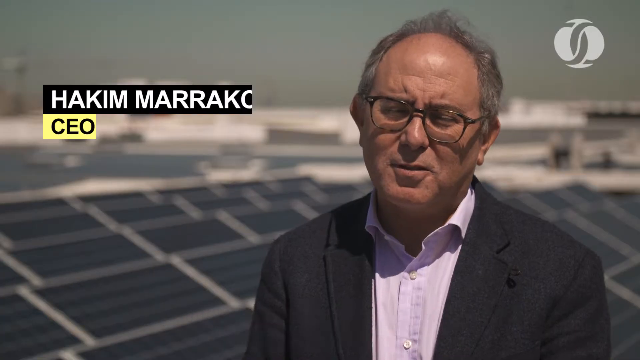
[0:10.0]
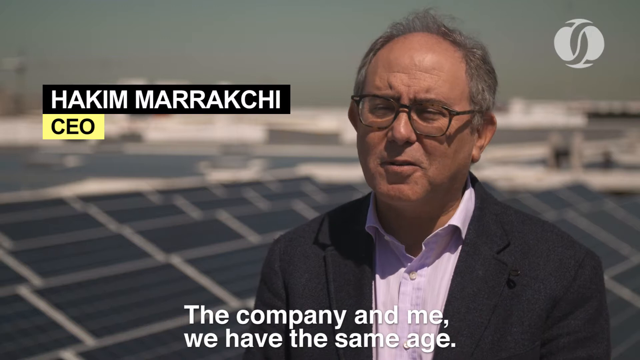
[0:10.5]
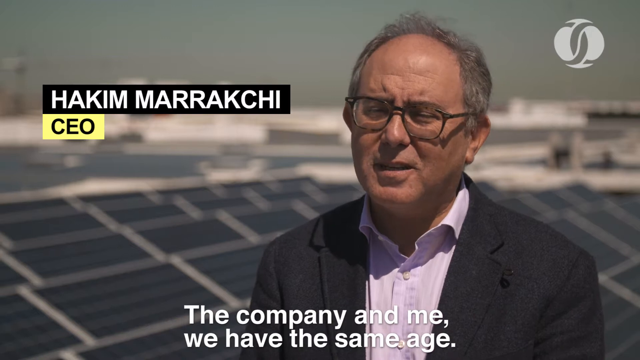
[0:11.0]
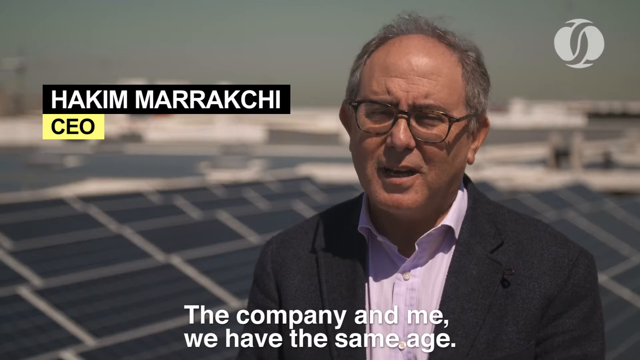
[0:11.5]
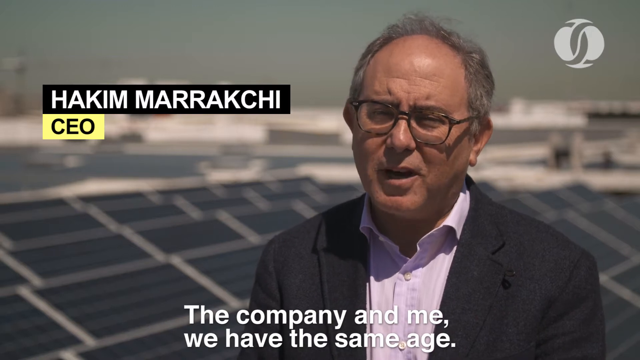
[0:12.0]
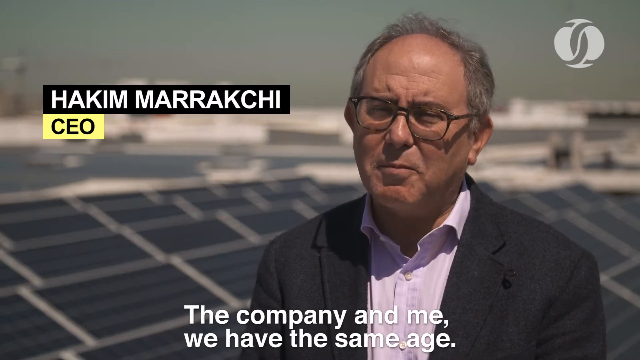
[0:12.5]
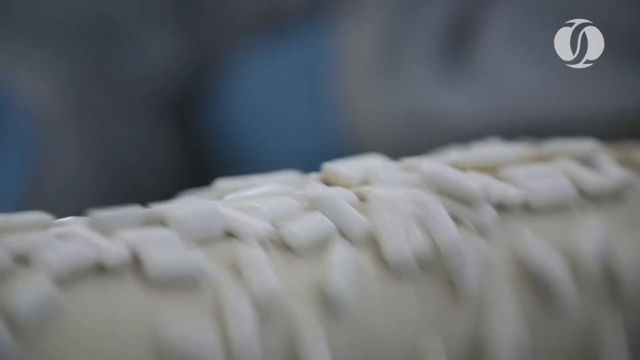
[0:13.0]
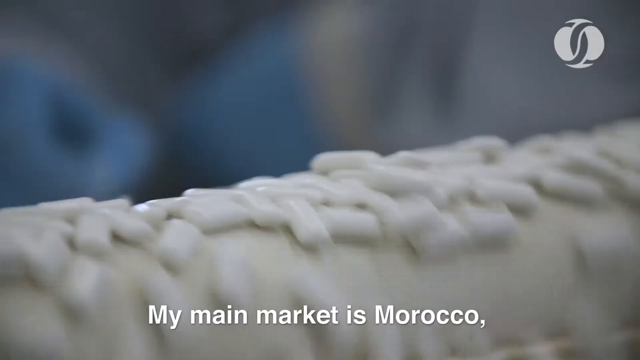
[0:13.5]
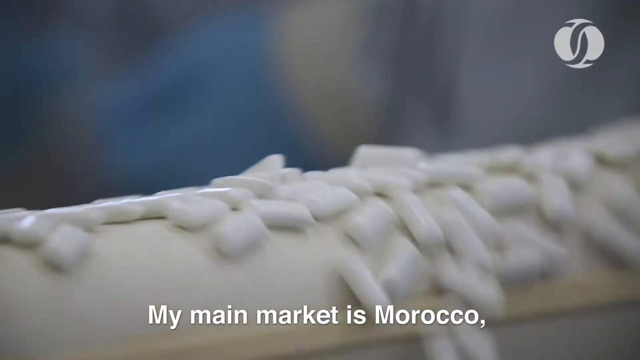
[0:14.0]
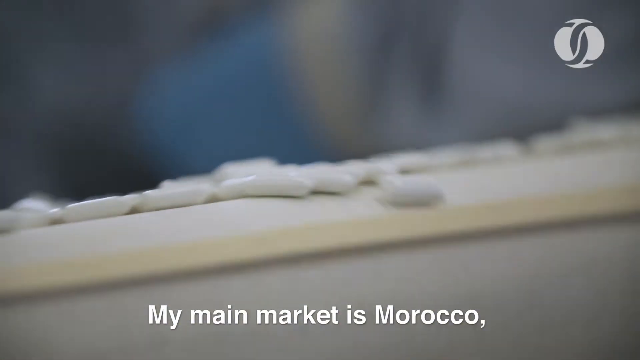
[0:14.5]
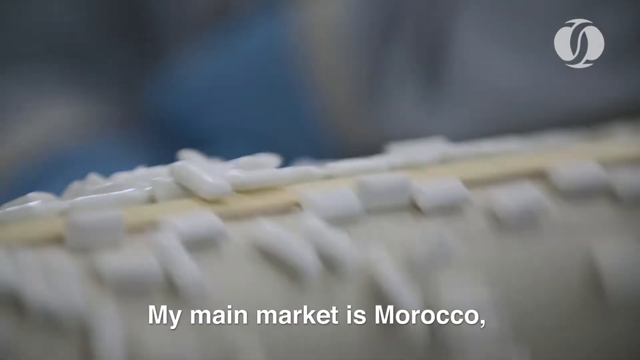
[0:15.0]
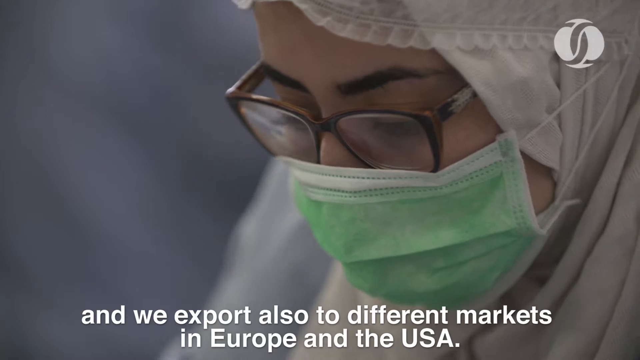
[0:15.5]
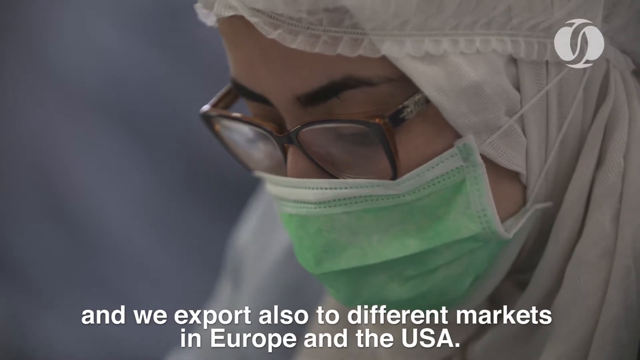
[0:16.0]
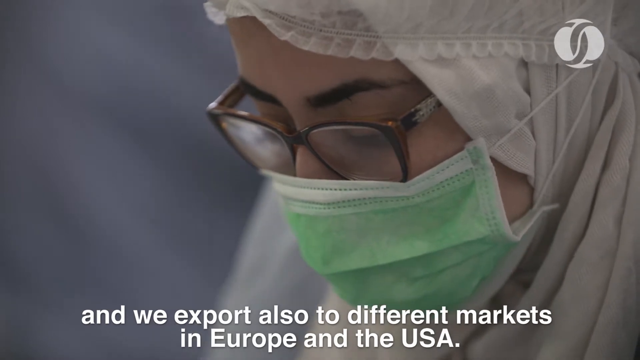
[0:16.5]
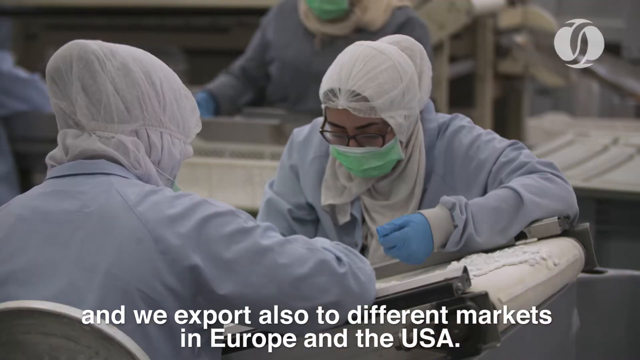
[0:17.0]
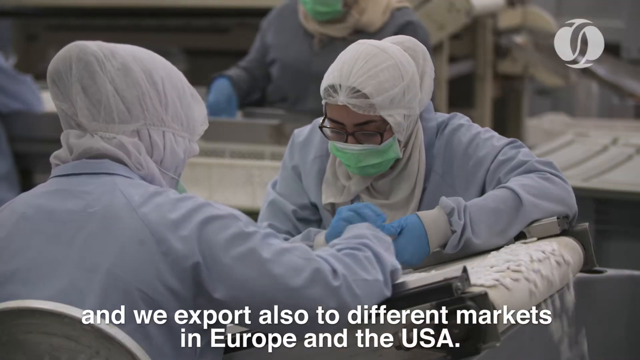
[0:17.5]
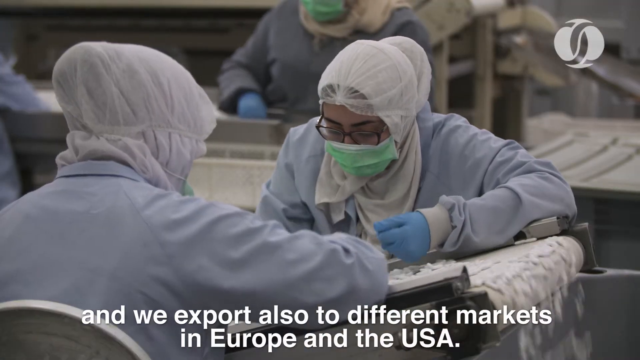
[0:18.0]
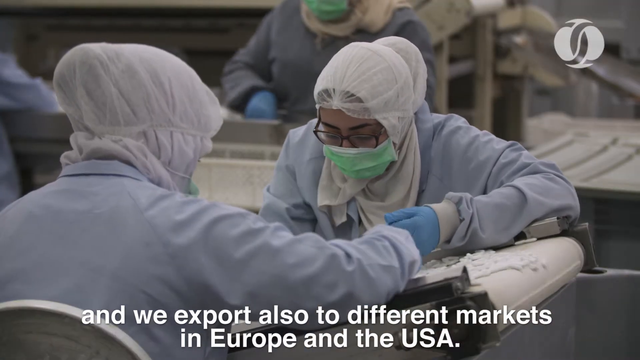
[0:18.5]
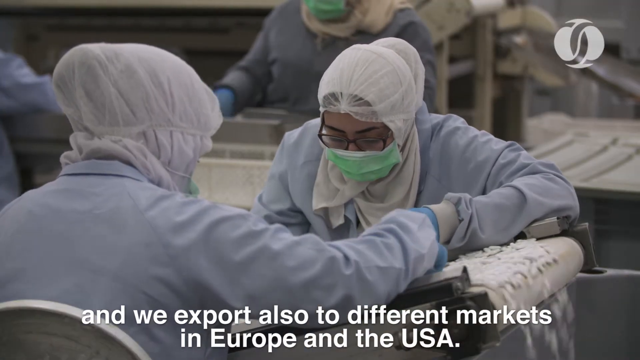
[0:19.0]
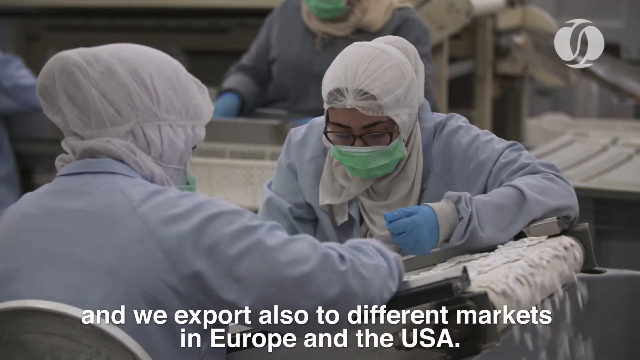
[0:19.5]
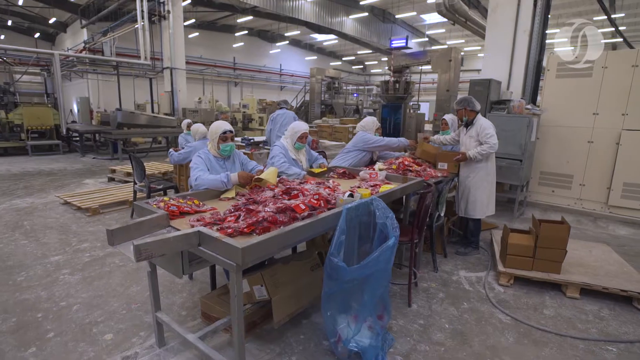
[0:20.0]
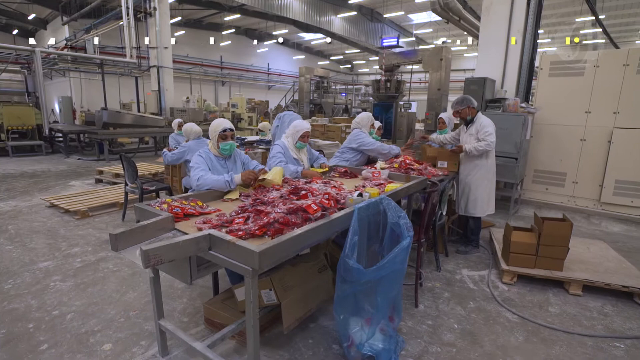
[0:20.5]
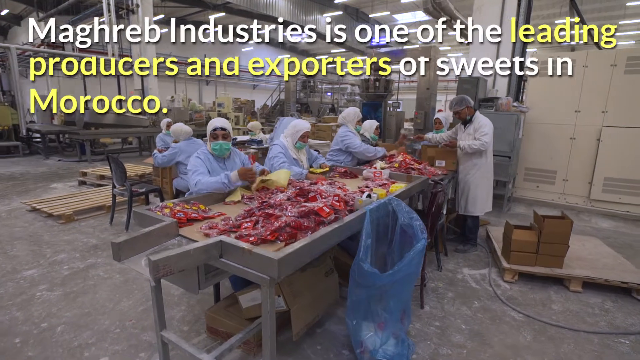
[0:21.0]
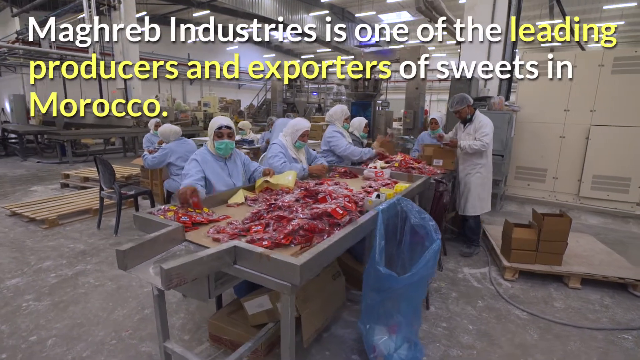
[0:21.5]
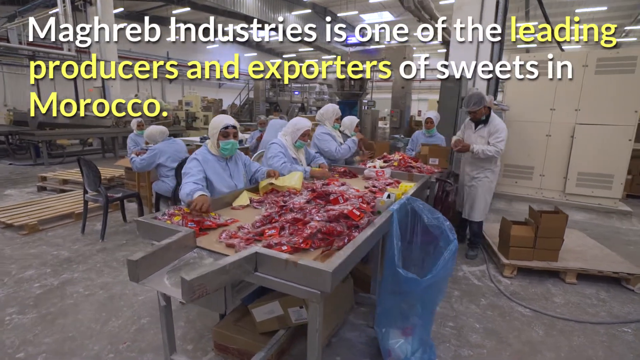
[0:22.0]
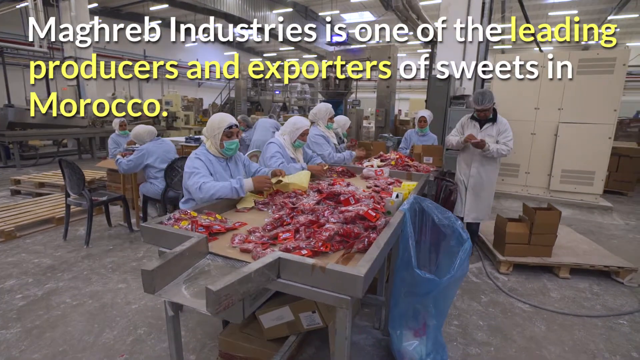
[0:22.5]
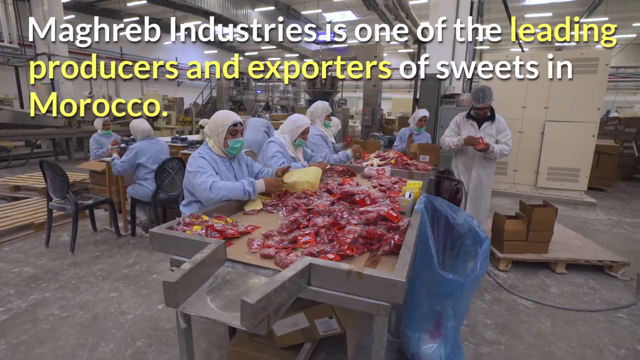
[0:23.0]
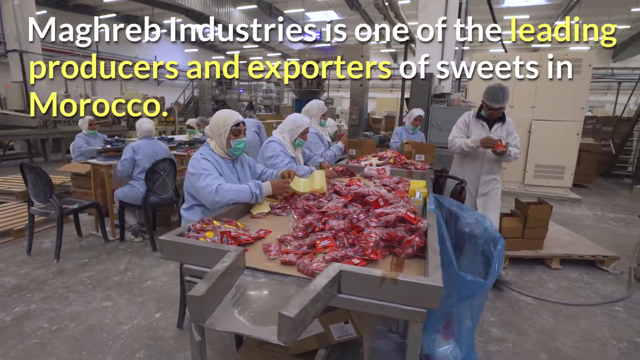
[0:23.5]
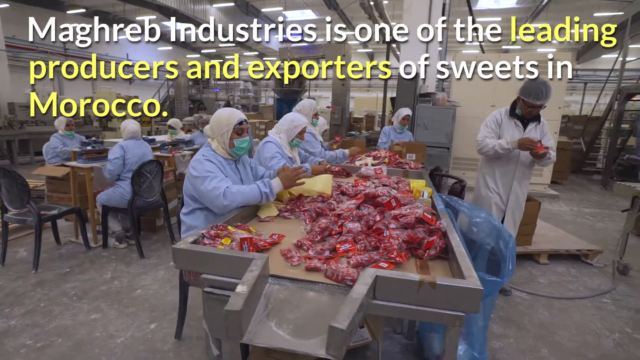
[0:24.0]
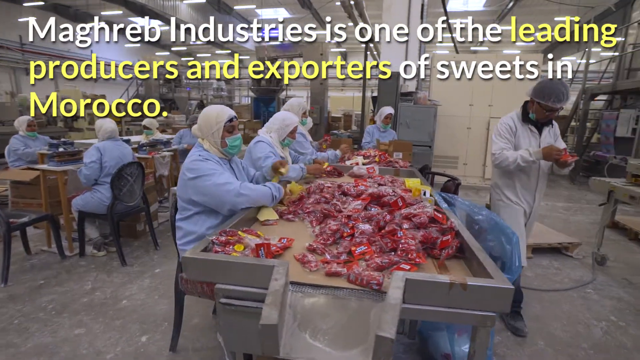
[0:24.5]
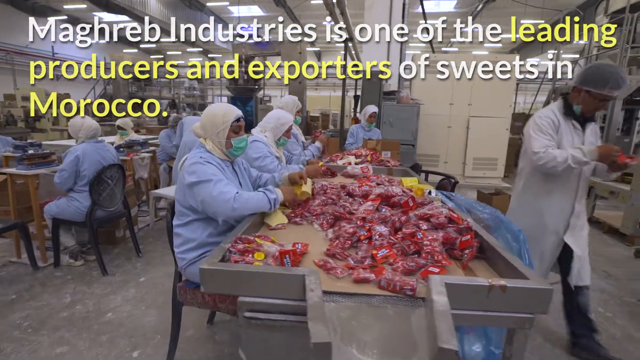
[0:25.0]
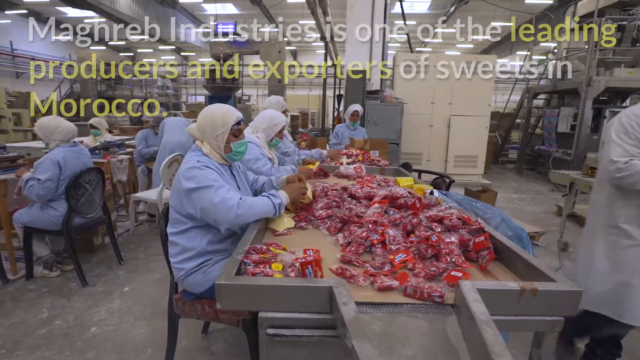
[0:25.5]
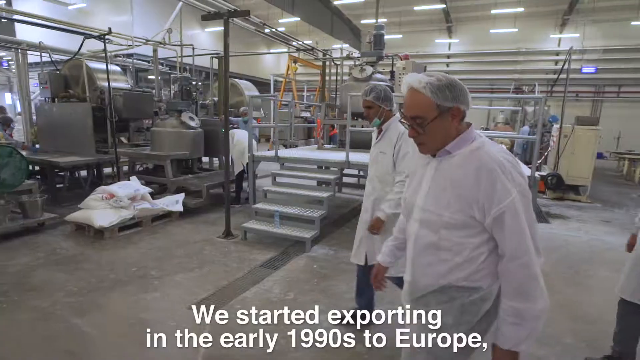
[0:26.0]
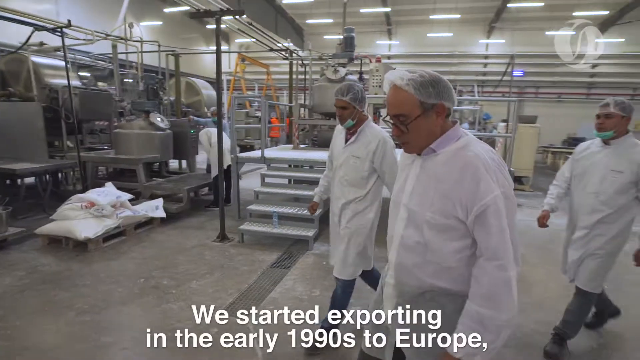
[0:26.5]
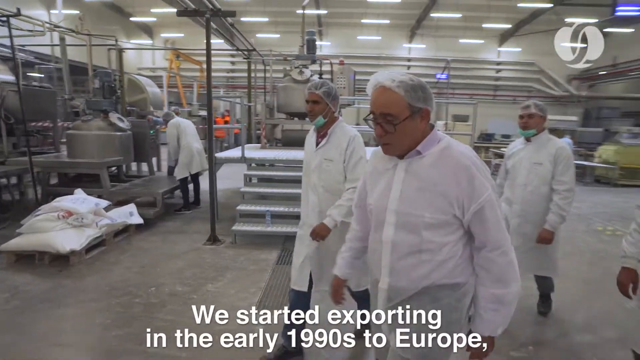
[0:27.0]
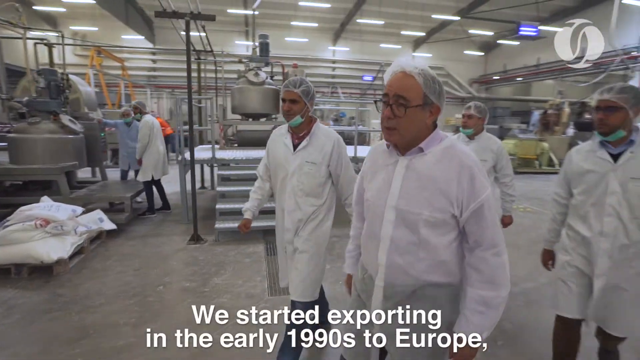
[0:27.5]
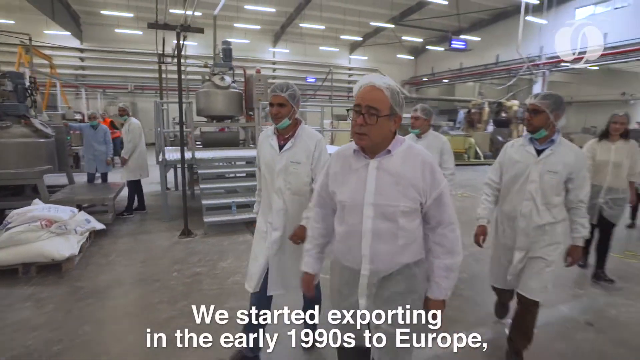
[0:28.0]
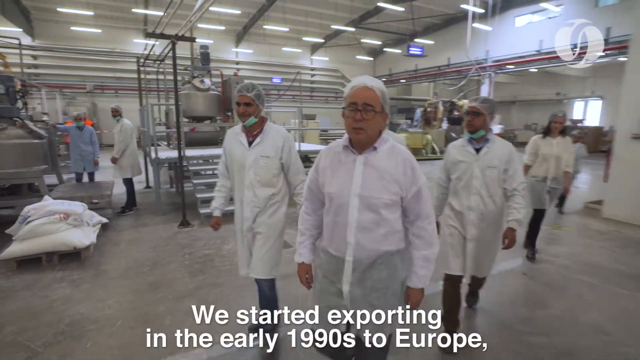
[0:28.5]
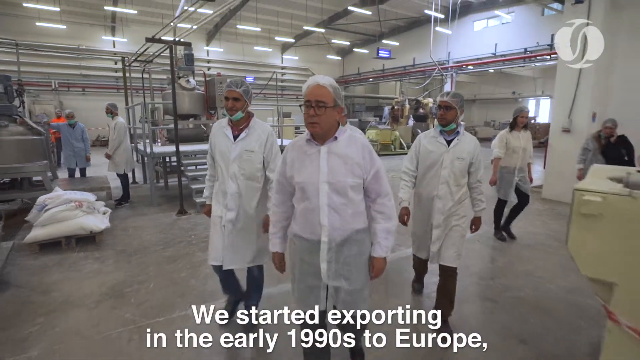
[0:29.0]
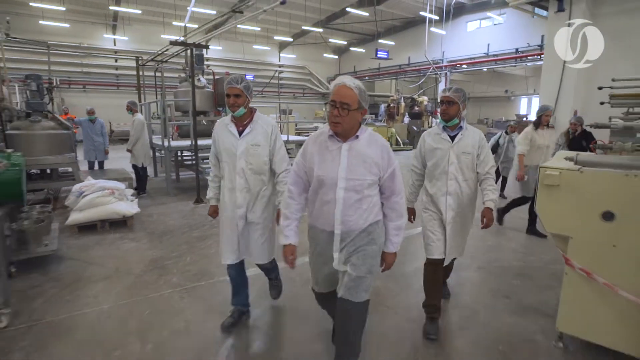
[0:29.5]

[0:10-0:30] The man, Haka Makaro, CEO, is shown. He wears glasses with black trim and clear lenses, has grayish hair, and wears a black tuxedo with a purple shirt. He is outside, apparently on top of a building. Text lines appear: "The company and me, we have the same age. My main market is Morocco, and we export also to different markets in Europe and the USA" and "Mohab Industries is one of the leading producers and exporters of sweets in Morocco." Gum is shown being made by workers, including a woman in a green mask. The text reads "we started exporting in the early 1990s to Europe" and then "thanks to the free trade market."